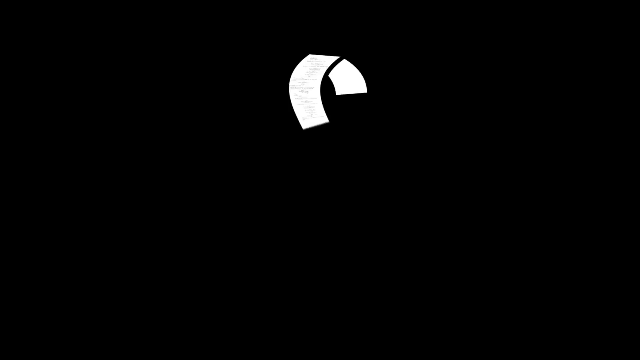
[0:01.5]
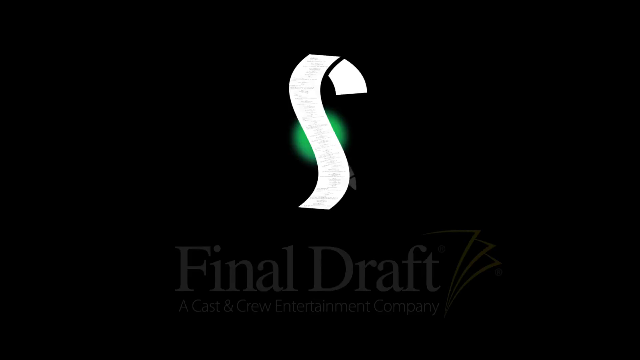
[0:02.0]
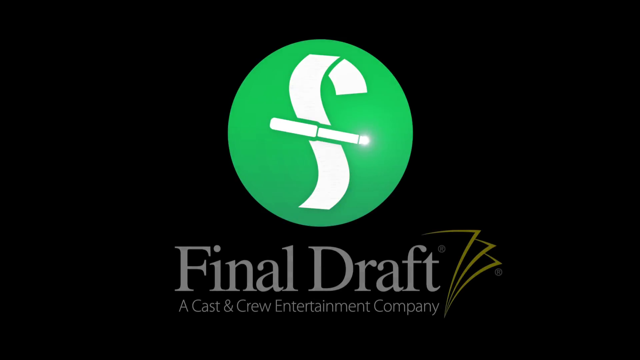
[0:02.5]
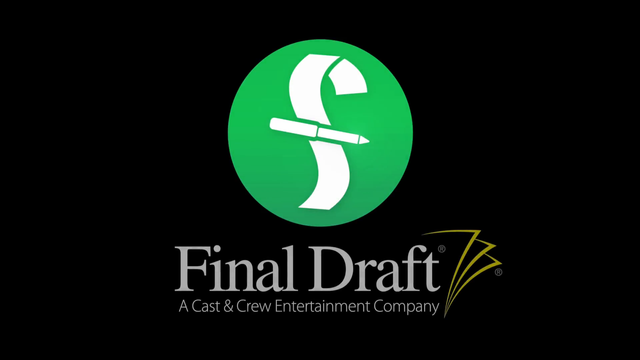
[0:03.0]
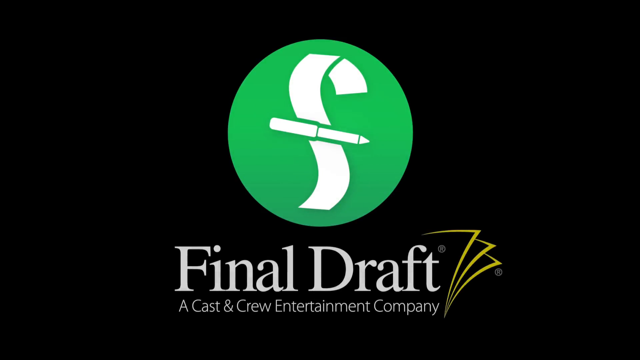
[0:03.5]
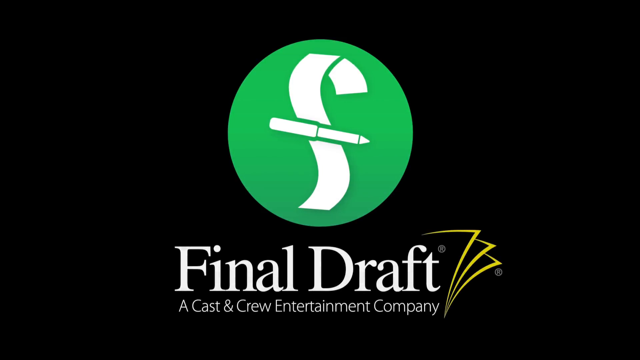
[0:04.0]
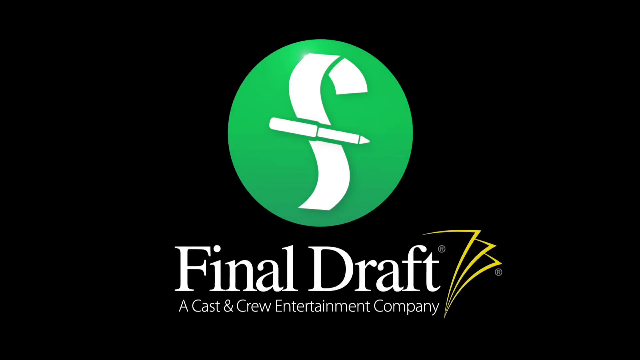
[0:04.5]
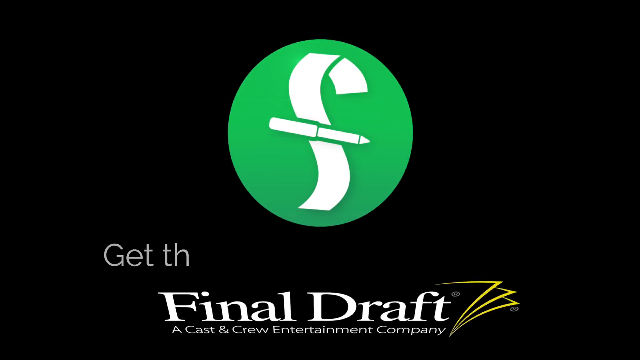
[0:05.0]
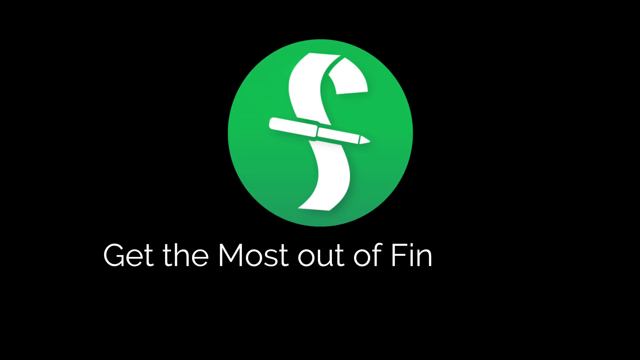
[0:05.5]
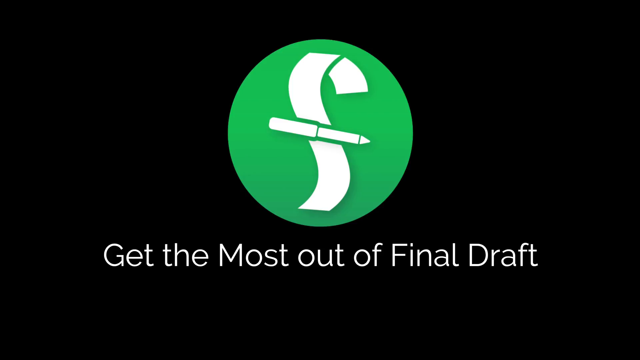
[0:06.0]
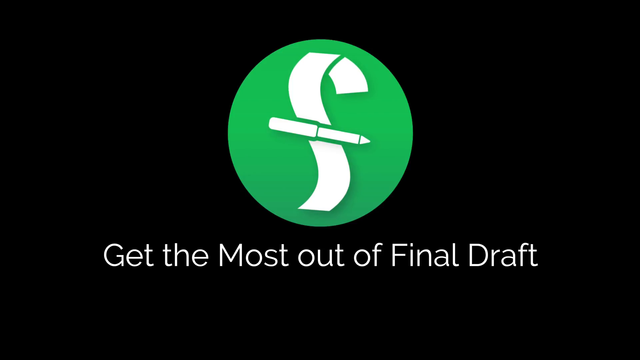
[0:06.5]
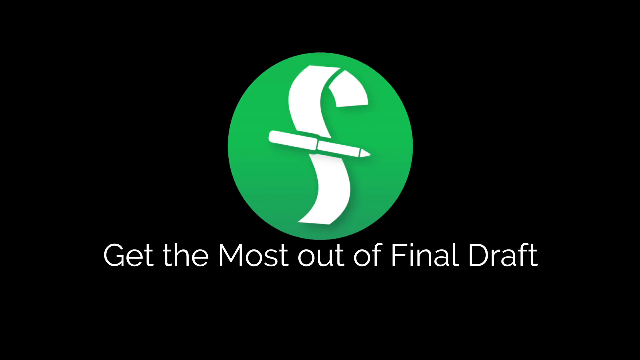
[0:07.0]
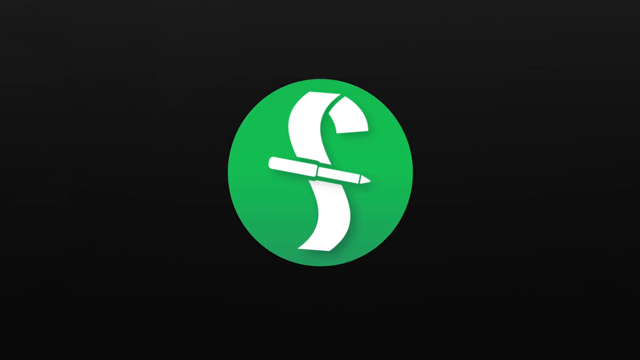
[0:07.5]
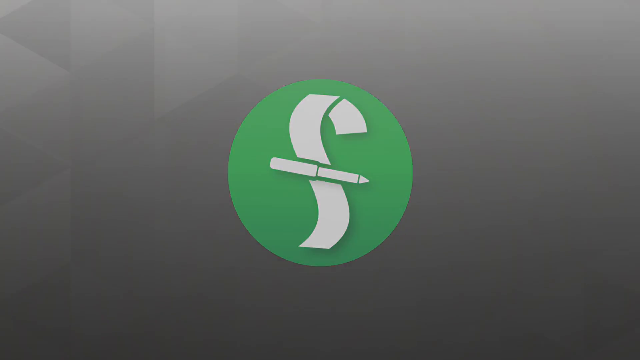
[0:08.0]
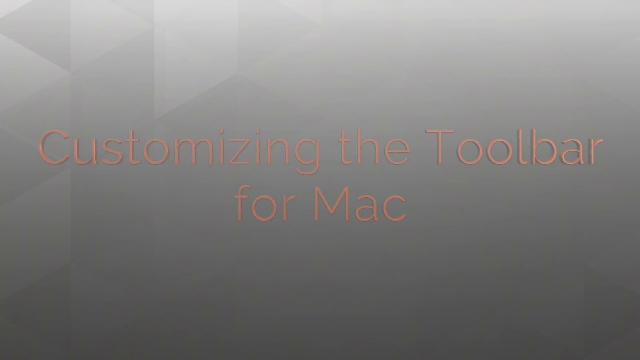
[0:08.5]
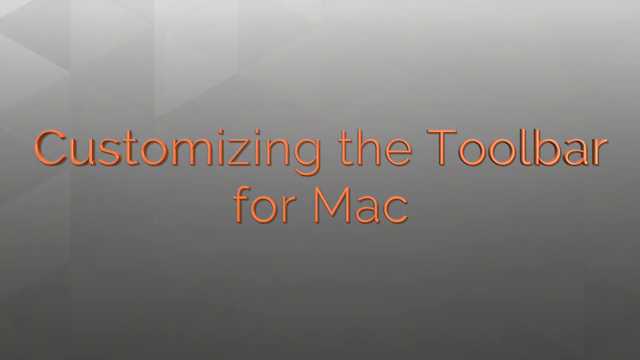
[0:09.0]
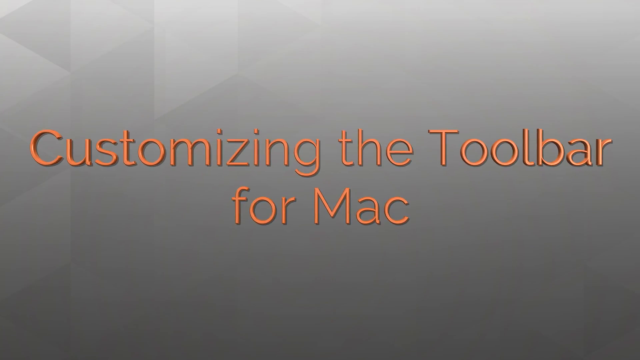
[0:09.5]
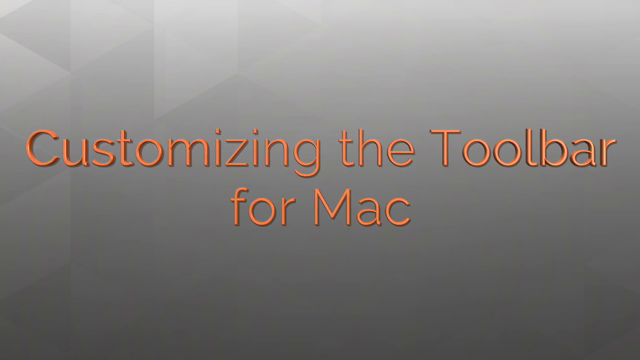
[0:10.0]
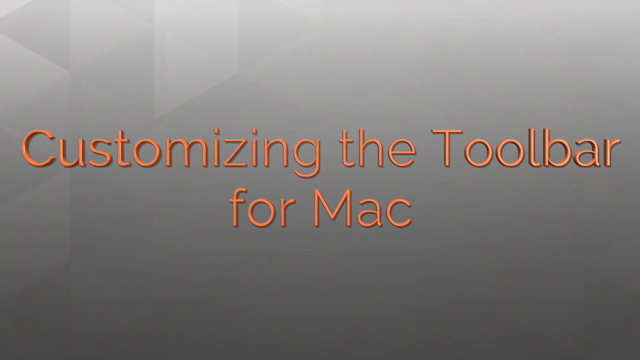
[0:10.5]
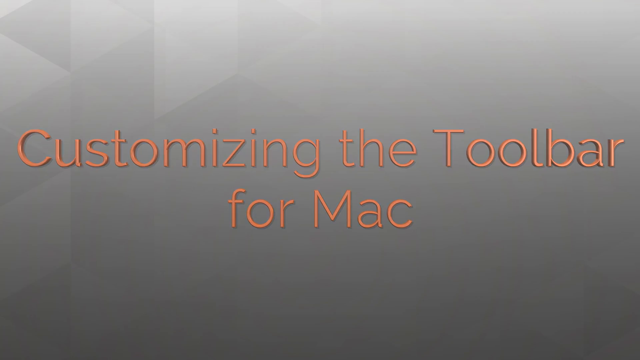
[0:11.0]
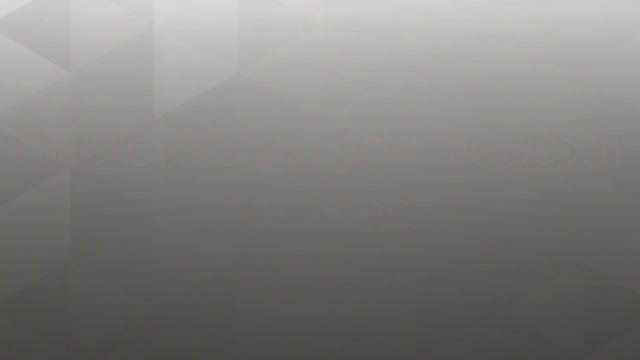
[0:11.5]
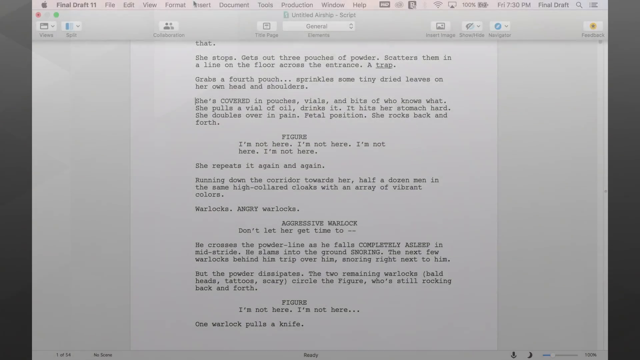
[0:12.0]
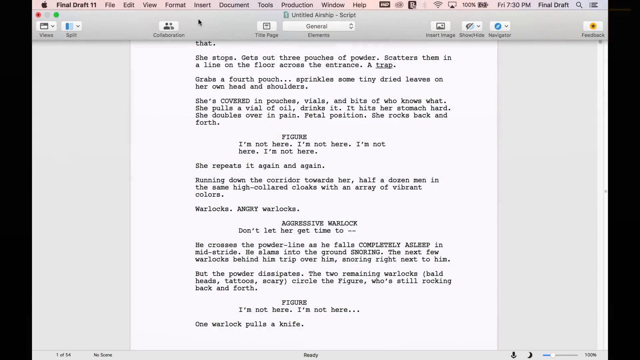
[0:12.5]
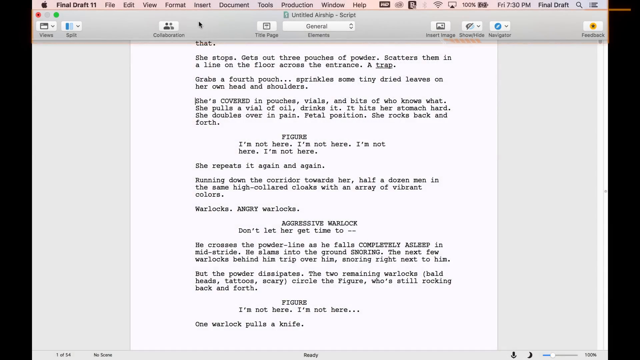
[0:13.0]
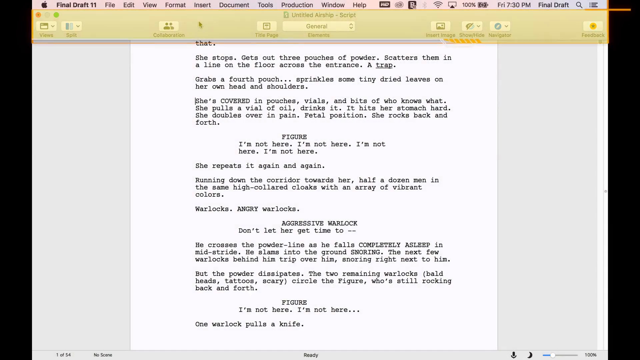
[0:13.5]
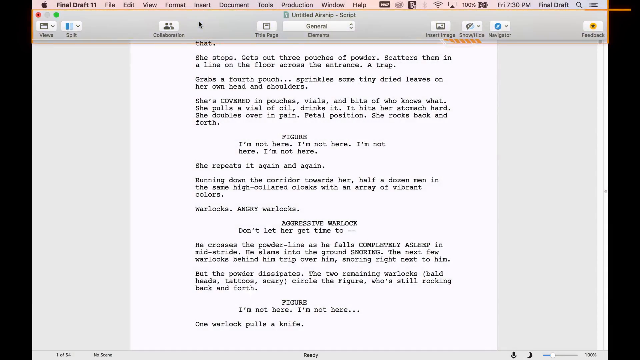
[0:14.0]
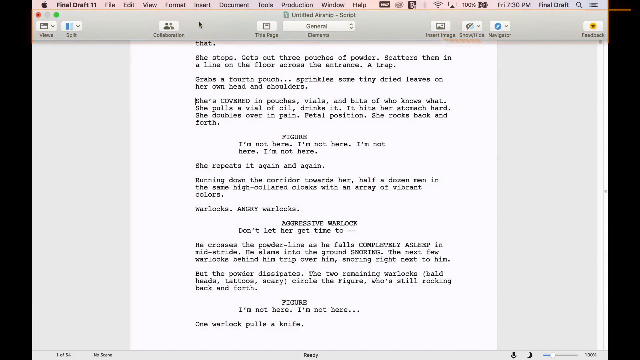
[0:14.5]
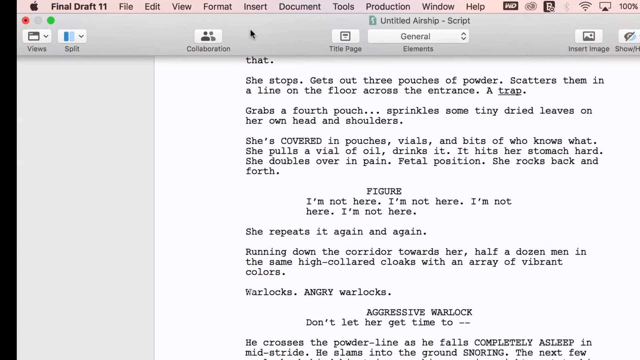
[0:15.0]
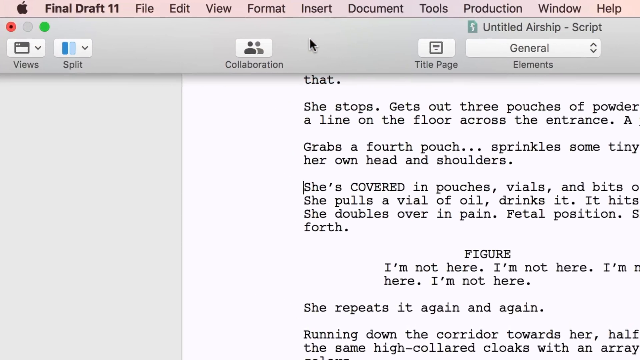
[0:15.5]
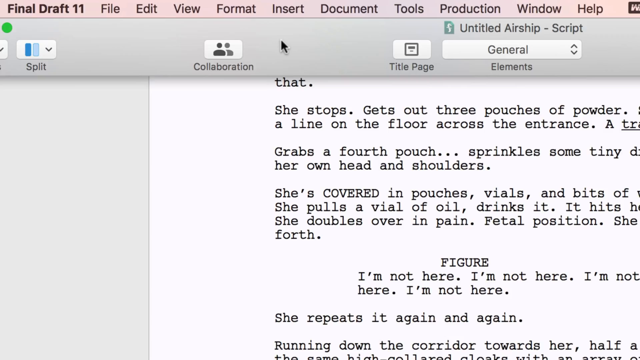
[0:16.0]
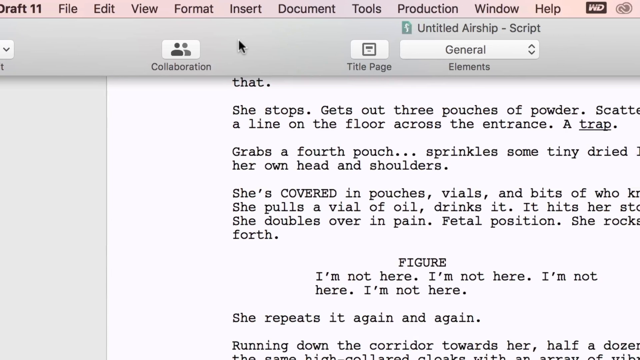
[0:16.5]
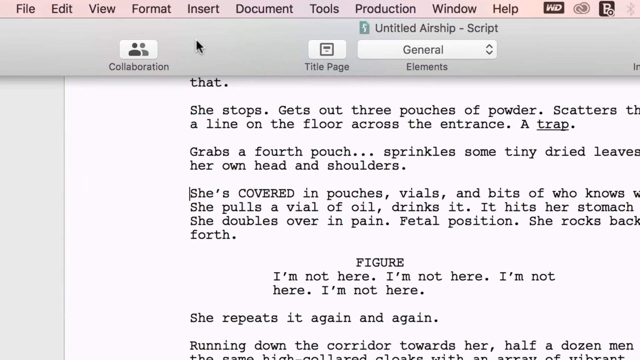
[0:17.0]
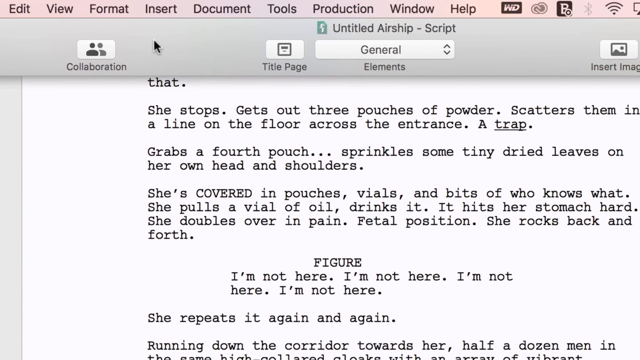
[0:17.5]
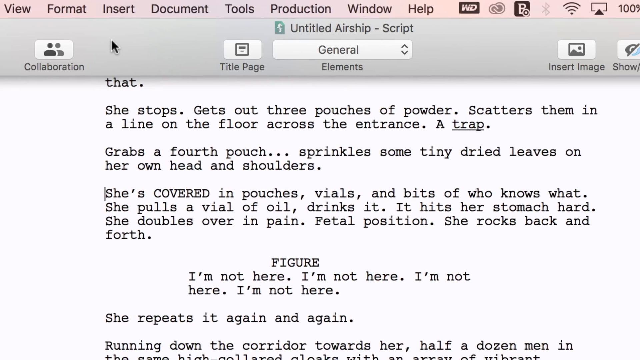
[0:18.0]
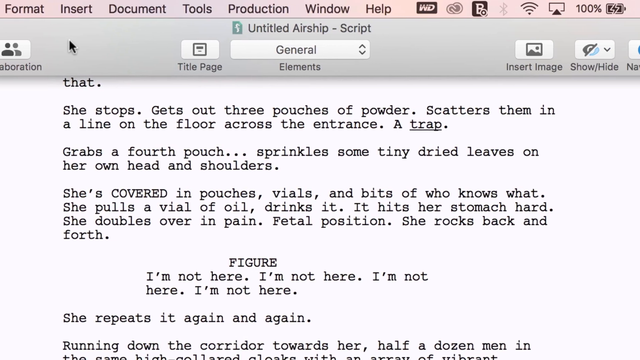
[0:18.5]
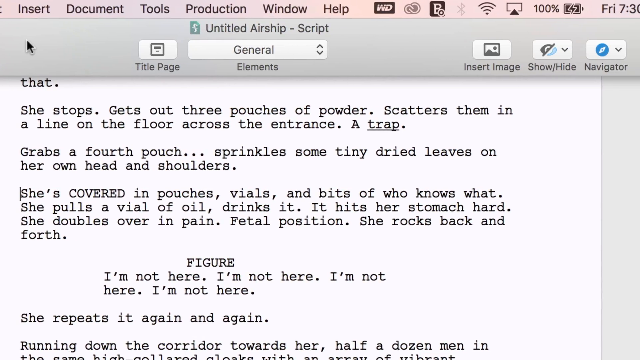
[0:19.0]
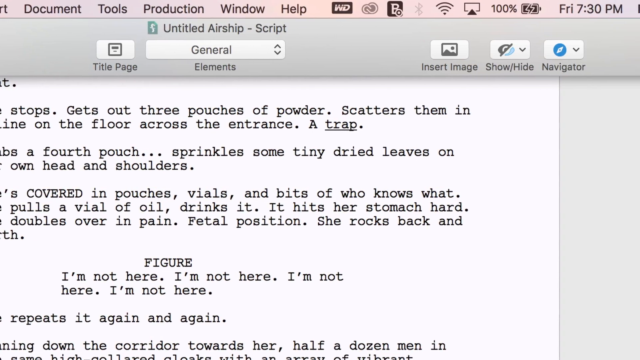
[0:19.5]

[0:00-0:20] The video begins with a black screen on which a white image emerges: a computer graphic of a logo with what looks like a pen going through the center, almost like an S, with a green circle around it and a pen at the bottom. Text reads "final draft a cast and crew entertainment company." It stays on this for a while, and text at the bottom reads "get the most out of final draft." The logo moves down a little and the background changes; another computer graphic appears reading "customizing the toolbar for mac," and it zooms in. The view then cuts to an application on a computer that looks like a word processing document, with "final draft 11" at the top. On screen is a page with a bunch of text on it, some sort of play or movie, and a mouse cursor at the top. The camera zooms into the menu items at the top where the cursor is, showing items such as view, format, insert, document and tools. The title of the script is shown, reading "untitled airship - script," and some options, icons and symbols are visible at the top as well.